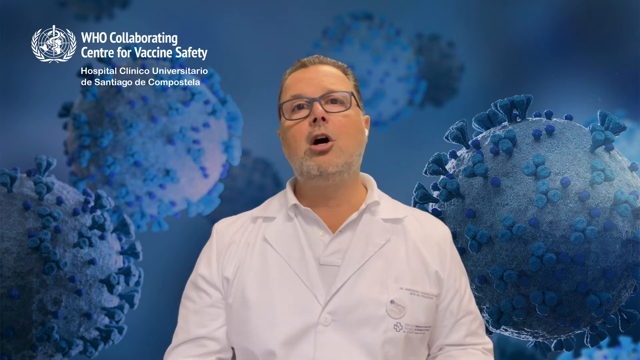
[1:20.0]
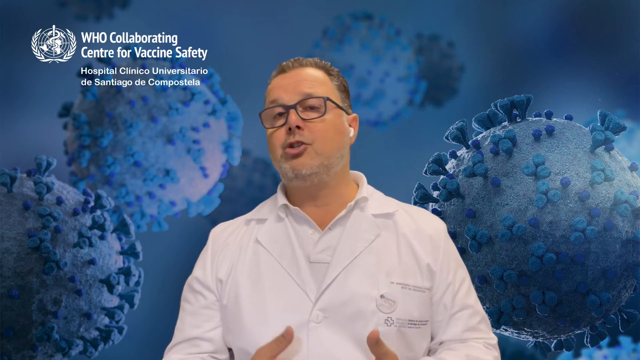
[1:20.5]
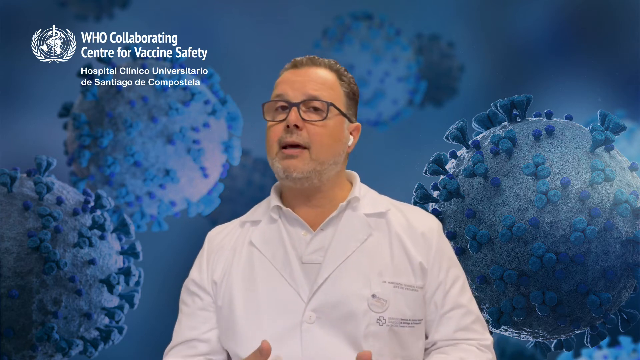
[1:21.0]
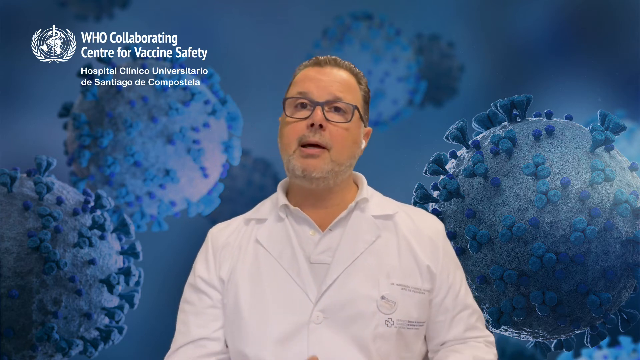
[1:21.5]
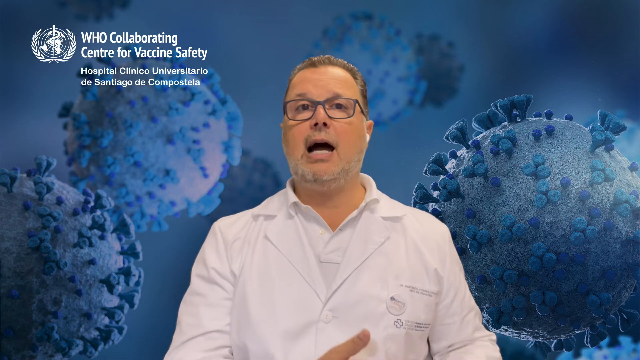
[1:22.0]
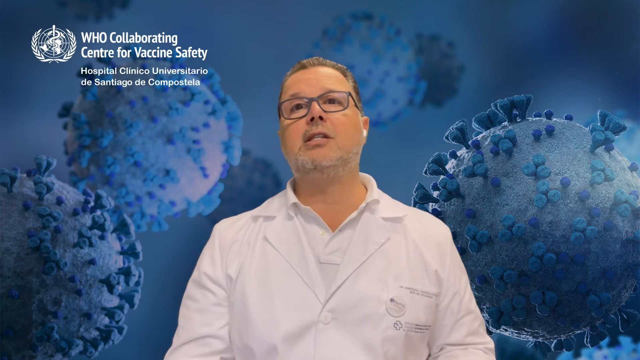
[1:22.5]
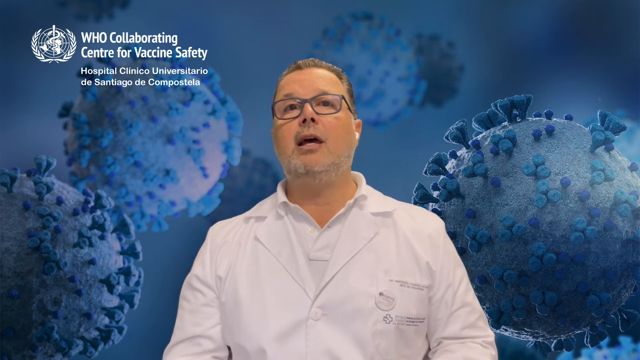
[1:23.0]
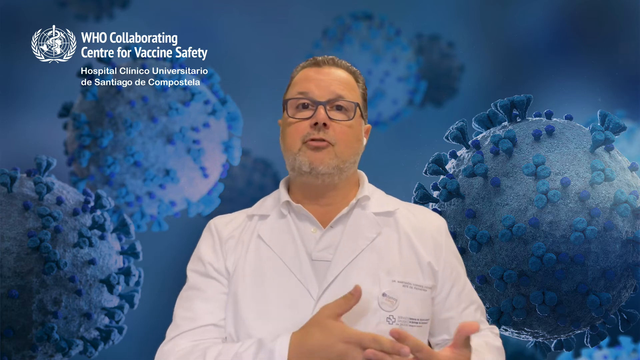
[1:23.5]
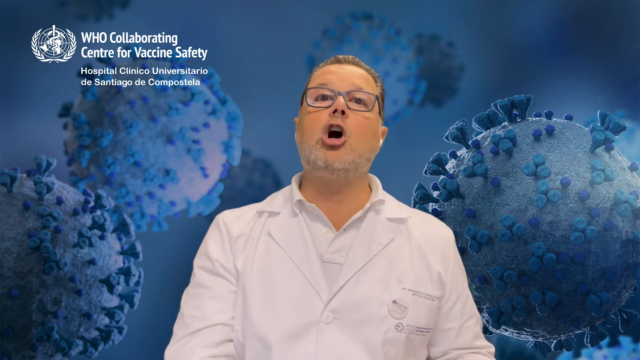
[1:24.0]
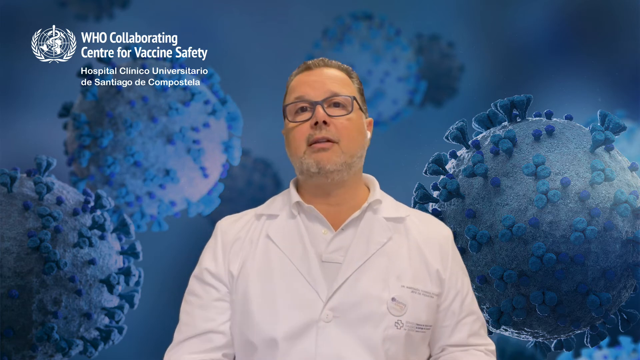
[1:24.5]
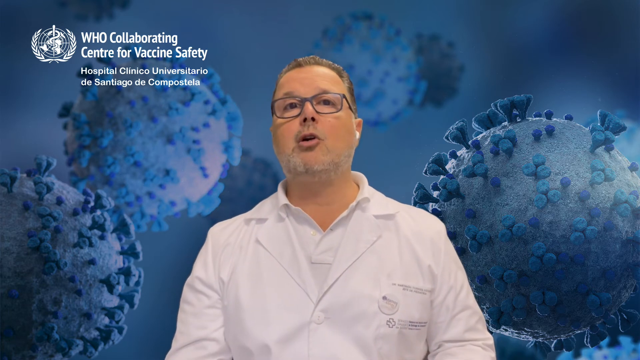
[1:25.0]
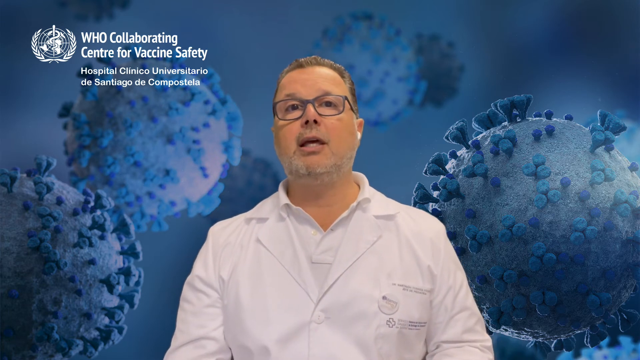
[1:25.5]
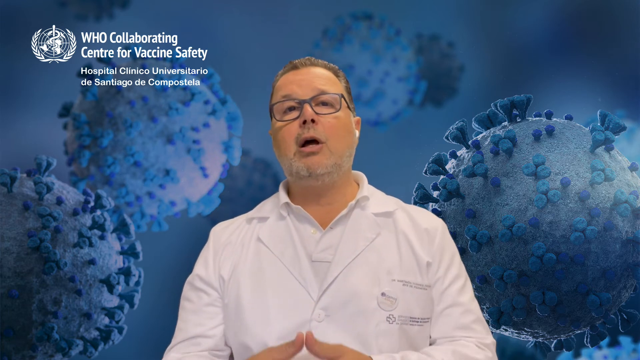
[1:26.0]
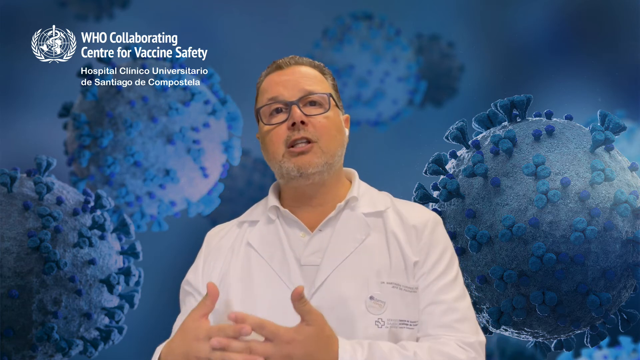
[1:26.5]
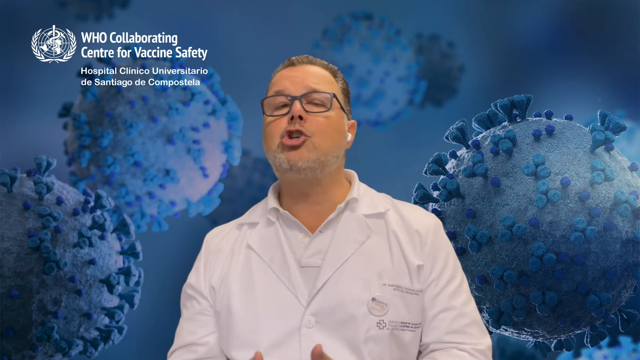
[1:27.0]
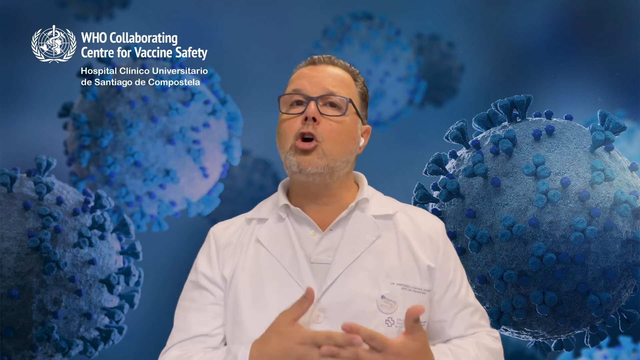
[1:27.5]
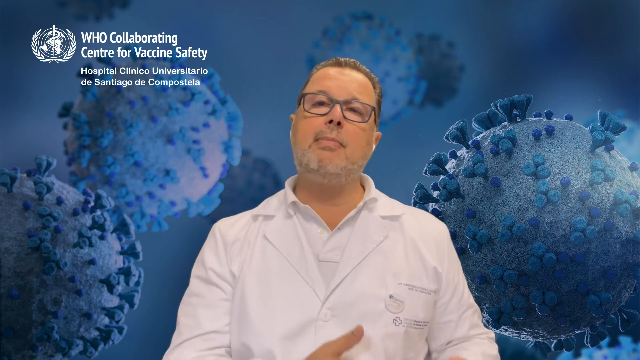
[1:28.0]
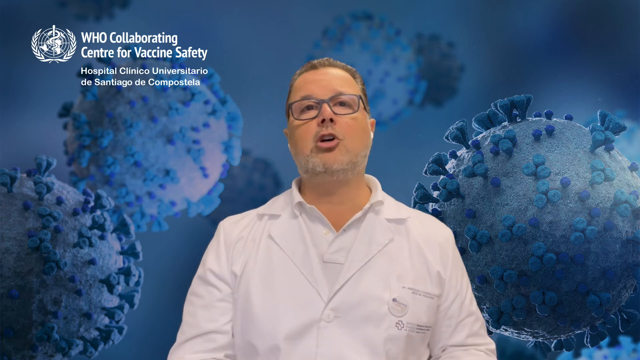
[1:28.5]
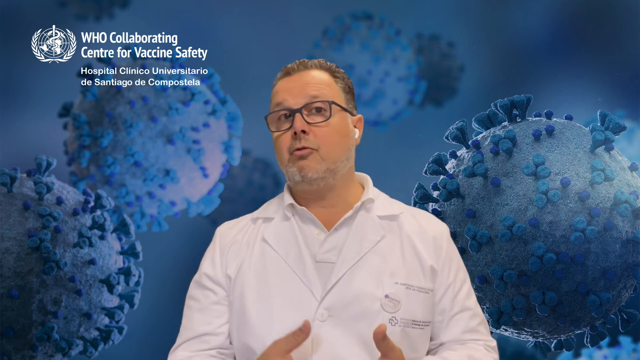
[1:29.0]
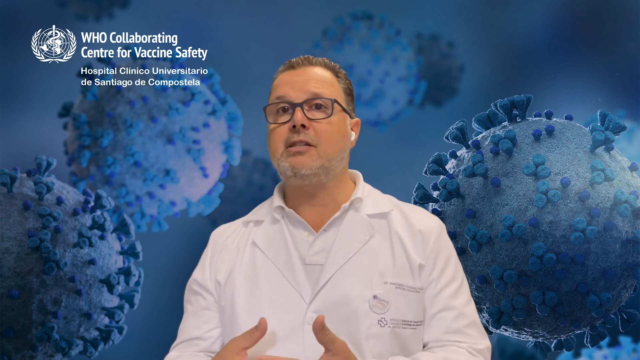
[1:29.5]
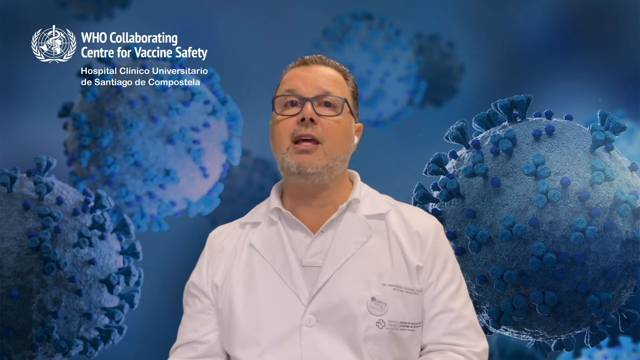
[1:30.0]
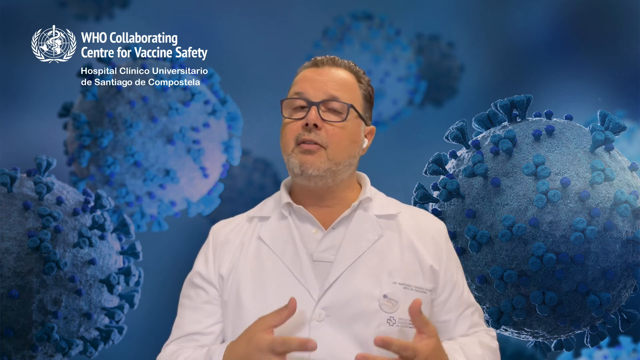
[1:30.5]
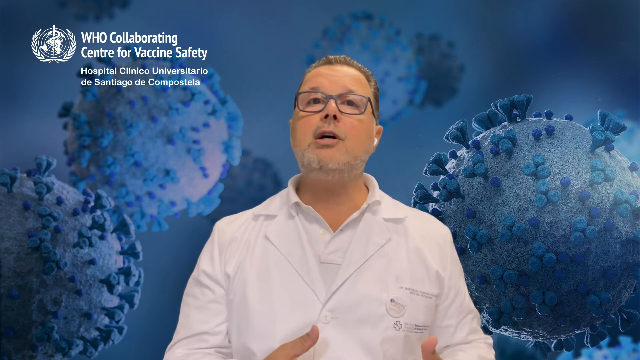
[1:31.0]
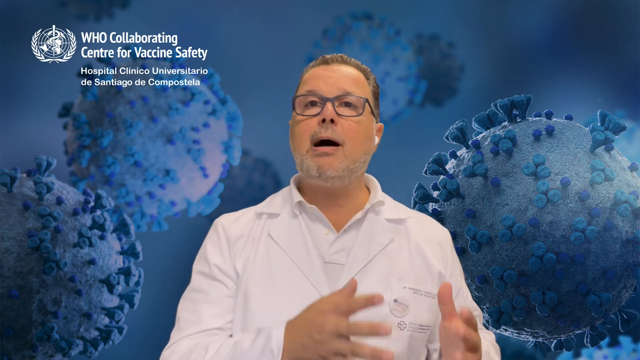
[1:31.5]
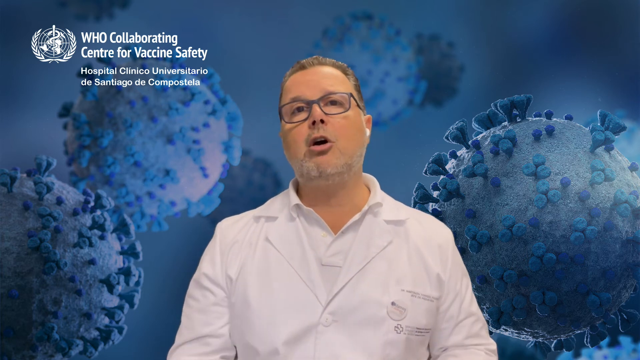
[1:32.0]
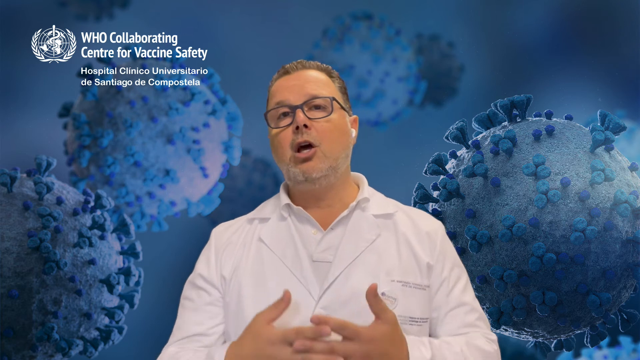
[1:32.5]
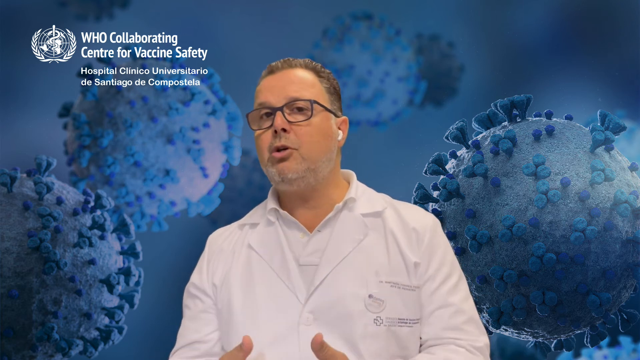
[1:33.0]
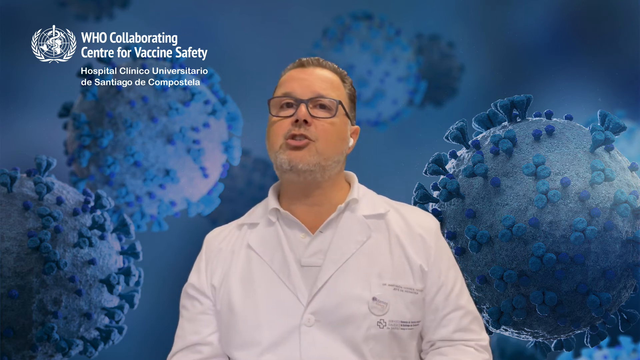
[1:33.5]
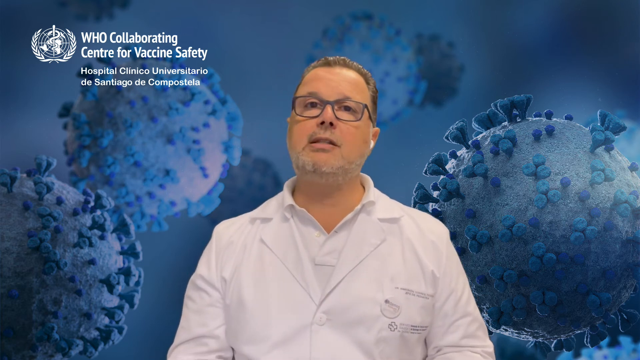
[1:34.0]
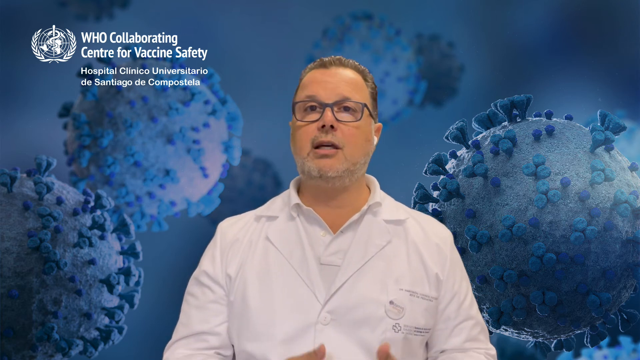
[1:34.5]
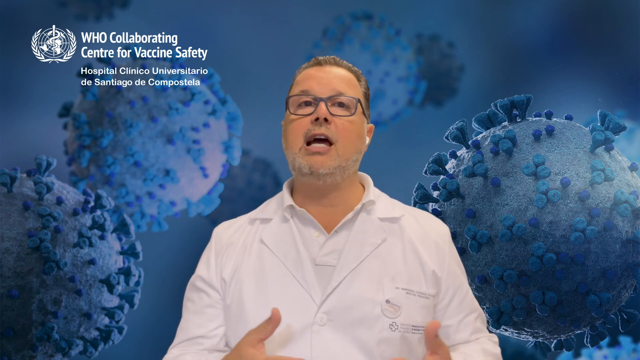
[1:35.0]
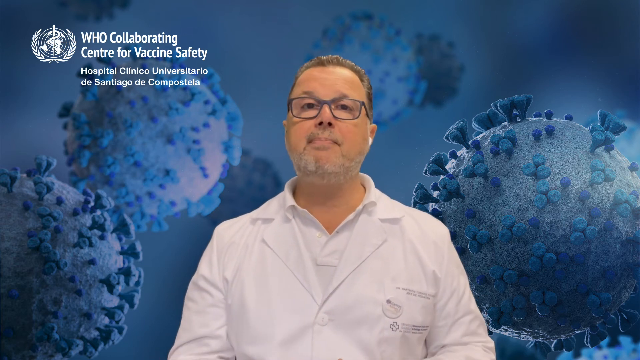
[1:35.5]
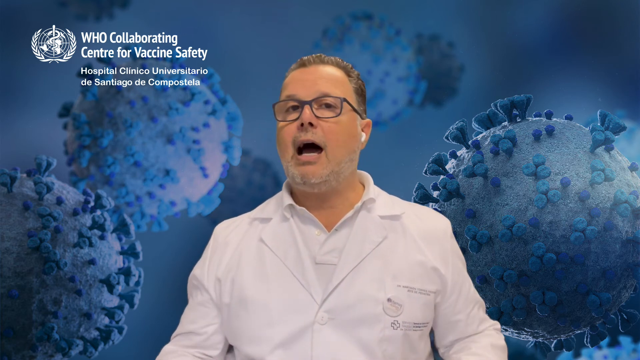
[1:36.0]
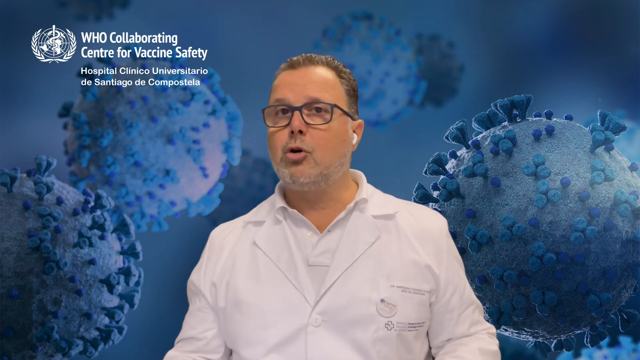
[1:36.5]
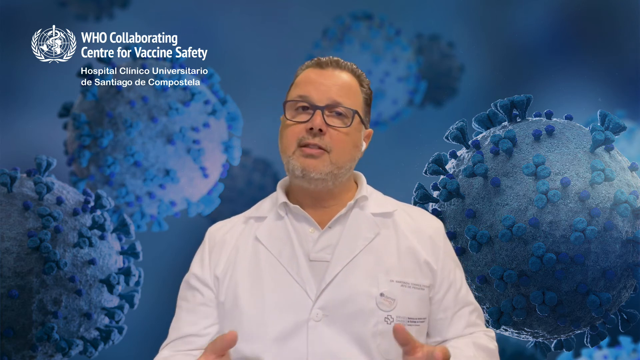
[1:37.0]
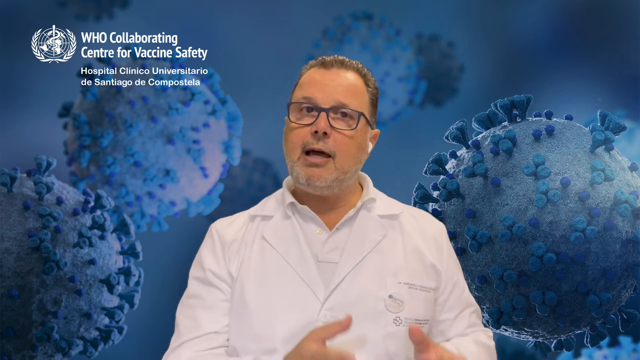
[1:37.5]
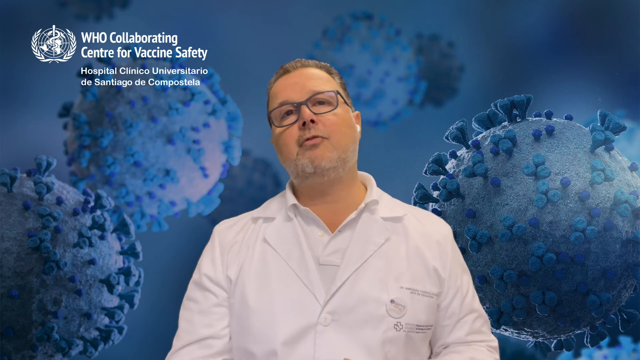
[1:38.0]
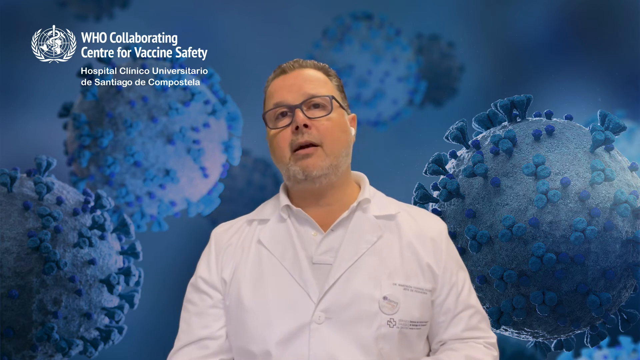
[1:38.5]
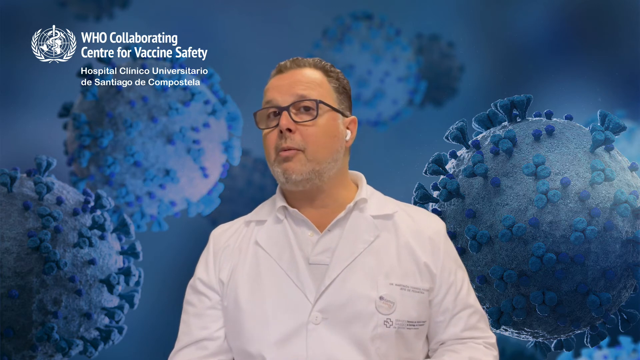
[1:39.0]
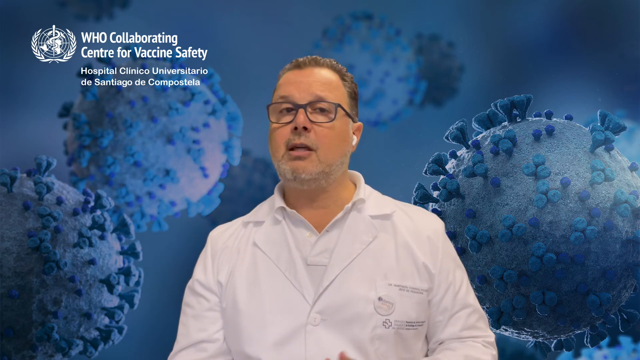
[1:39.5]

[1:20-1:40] The background is blue, with eight blue spherical objects that are supposed to be viruses. In front of this is a man with black glasses, a white shirt, a white lab coat and white earpieces. In the upper left corner is a white symbol, with the white text "WHO Collaborating Center for Vaccine Safety" to its right and, below that in smaller white text, "Hospital Clinico Universitario de Santiago de Compostela". The man looks up a little and moves his hands from his right side to his left. His mouth opens several times and he becomes more animated, moving his hands up toward his chest and down. He moves his hands toward the left side of his body again, then toward the right. He flutters his eyes as he keeps speaking, moving his hands to his left and then his right again. His hands separate for a moment as he moves his body slightly to the right, still staring toward the viewer, and then he brings his hands back toward the center.